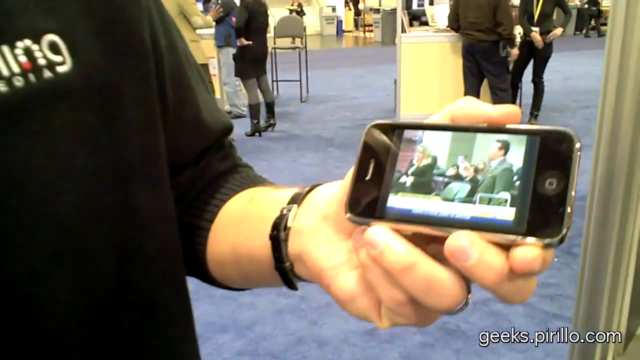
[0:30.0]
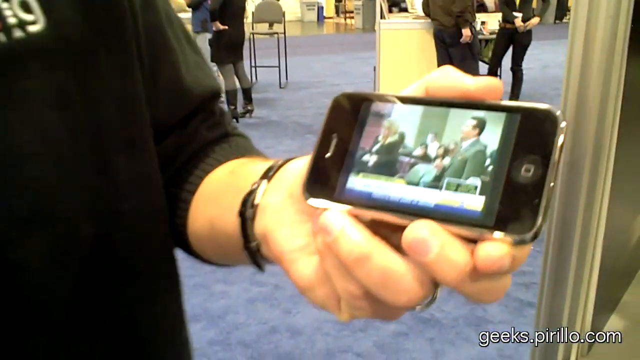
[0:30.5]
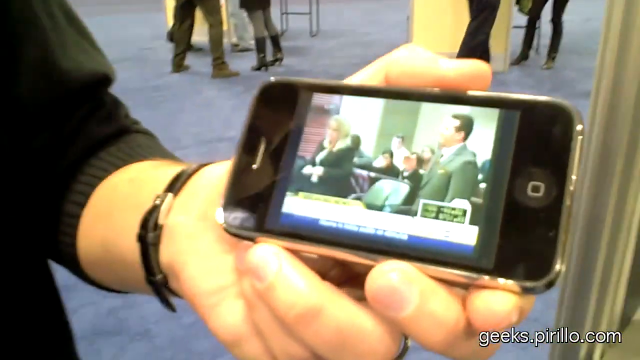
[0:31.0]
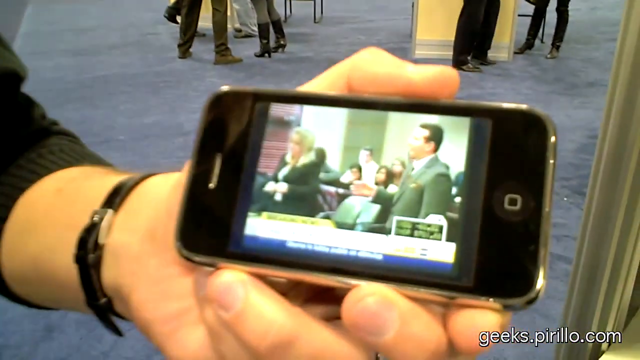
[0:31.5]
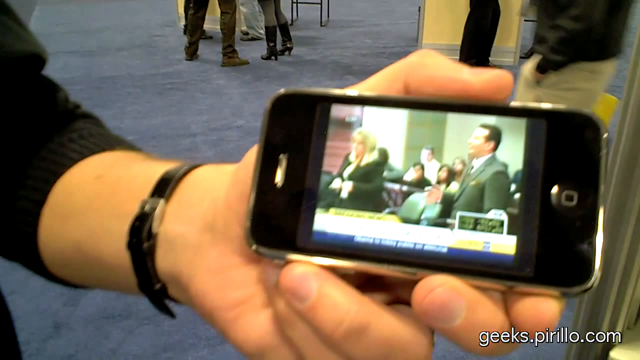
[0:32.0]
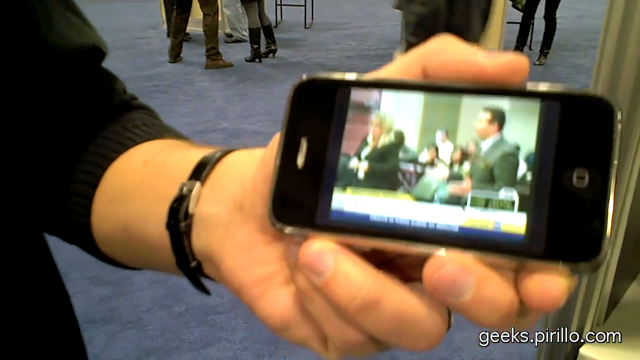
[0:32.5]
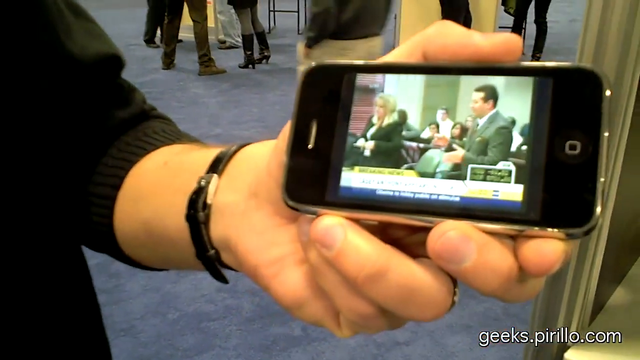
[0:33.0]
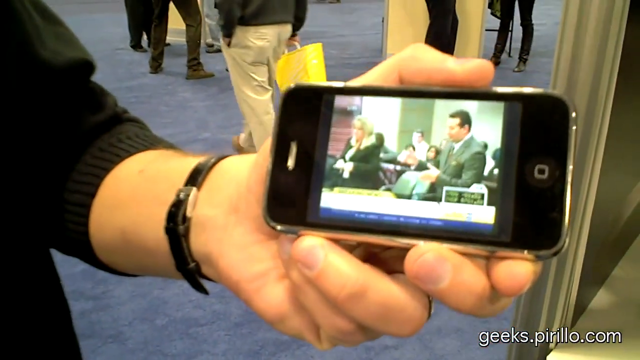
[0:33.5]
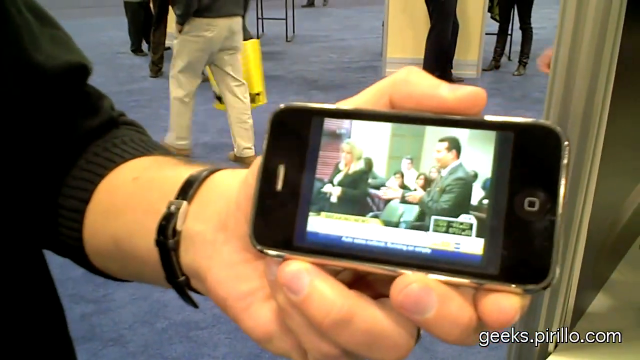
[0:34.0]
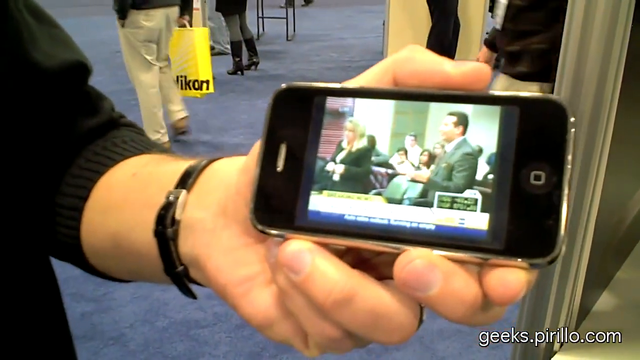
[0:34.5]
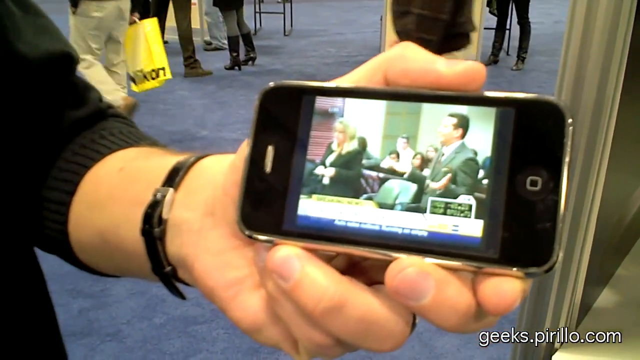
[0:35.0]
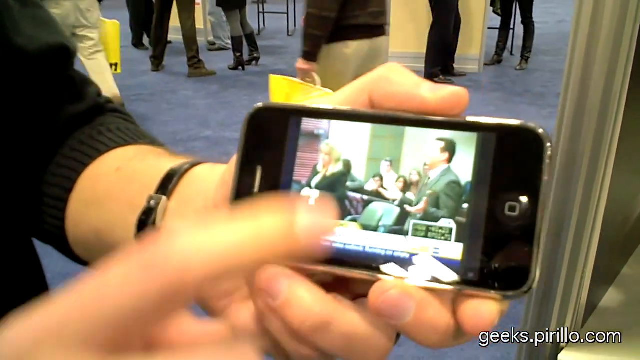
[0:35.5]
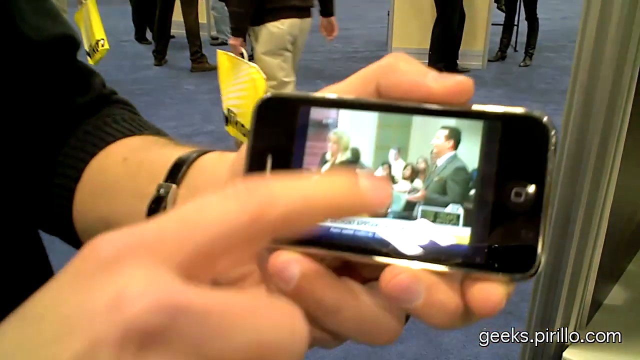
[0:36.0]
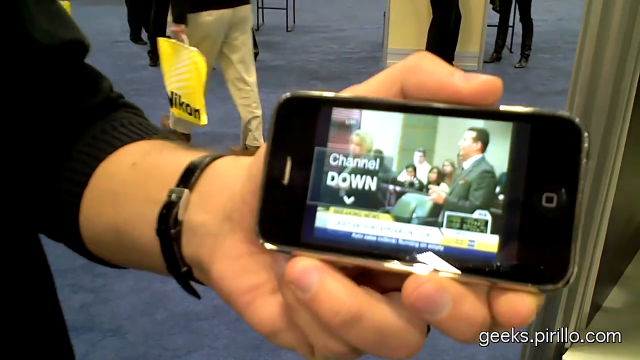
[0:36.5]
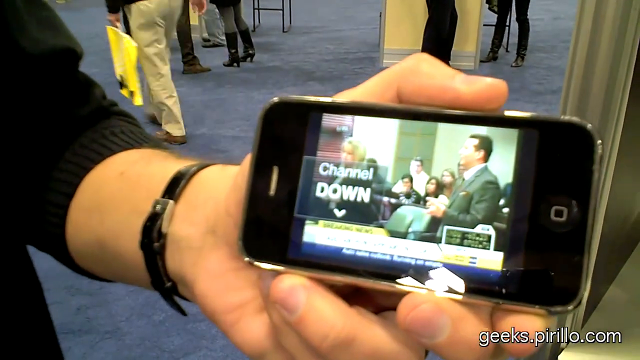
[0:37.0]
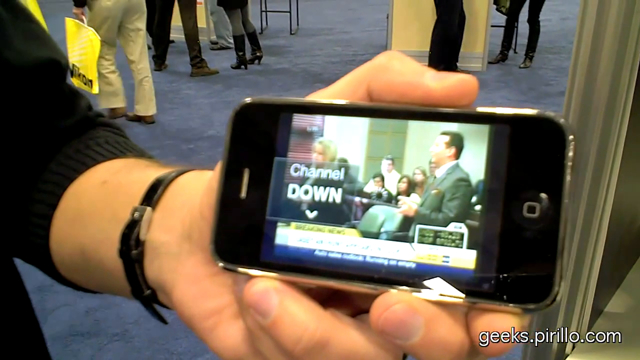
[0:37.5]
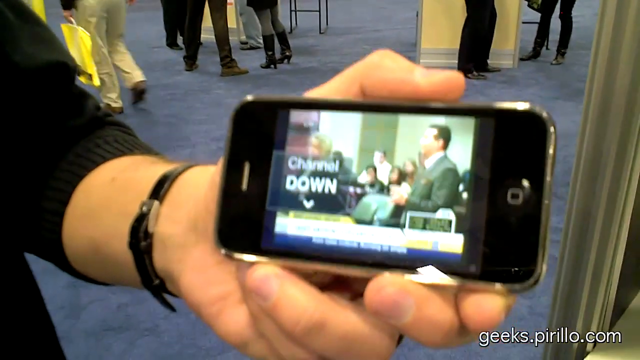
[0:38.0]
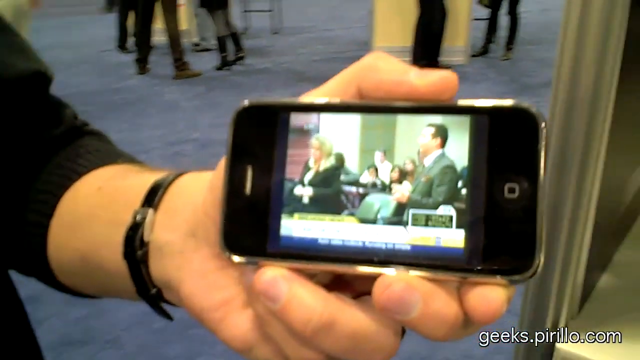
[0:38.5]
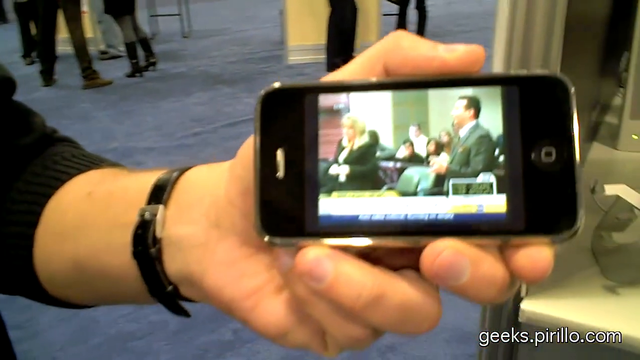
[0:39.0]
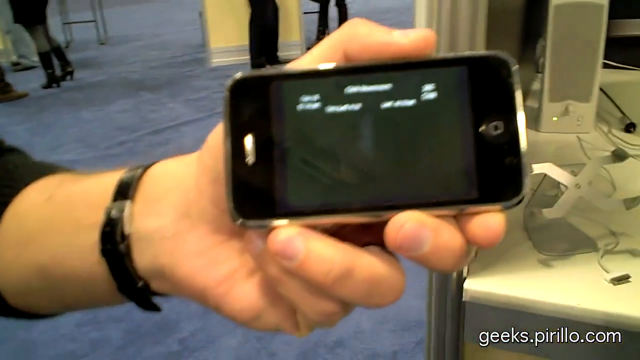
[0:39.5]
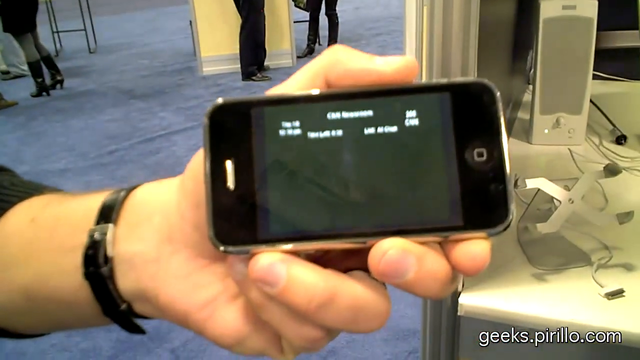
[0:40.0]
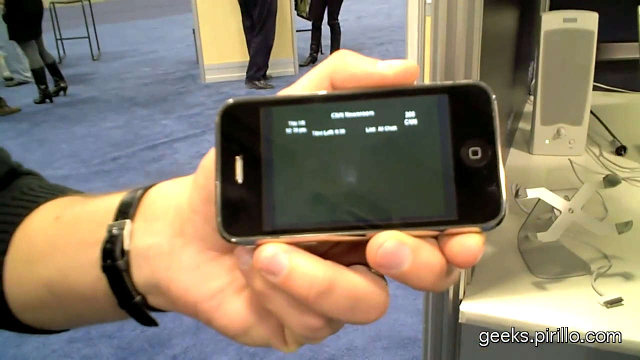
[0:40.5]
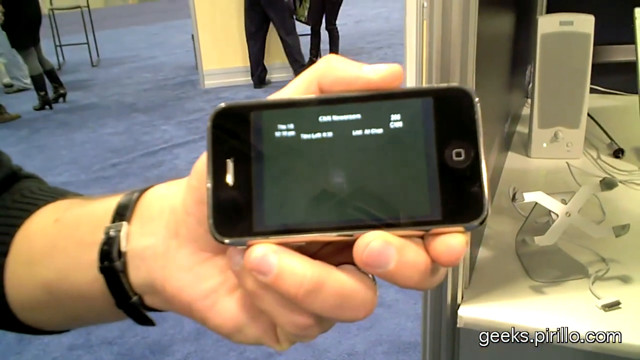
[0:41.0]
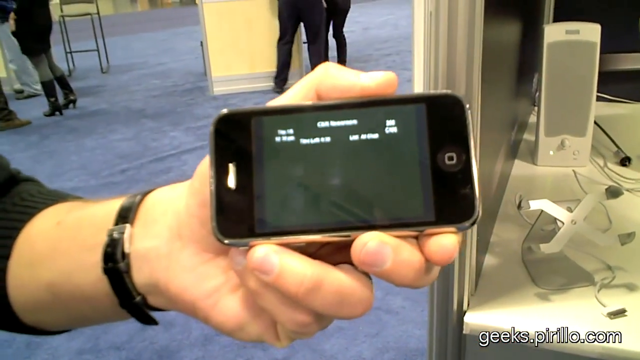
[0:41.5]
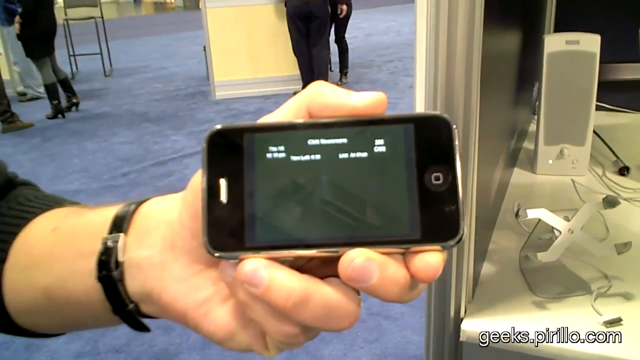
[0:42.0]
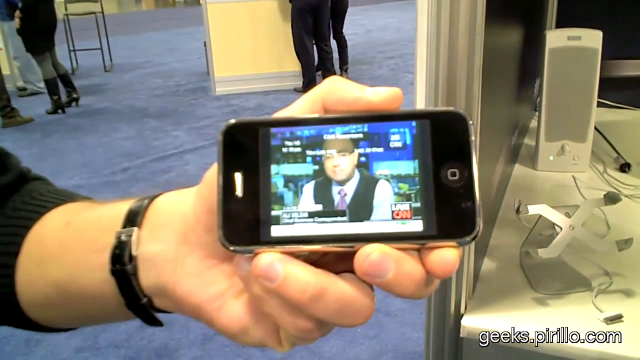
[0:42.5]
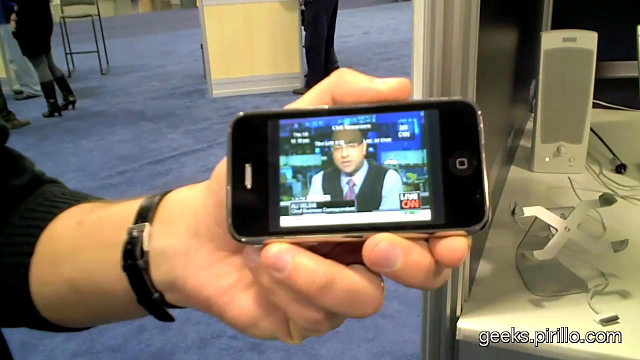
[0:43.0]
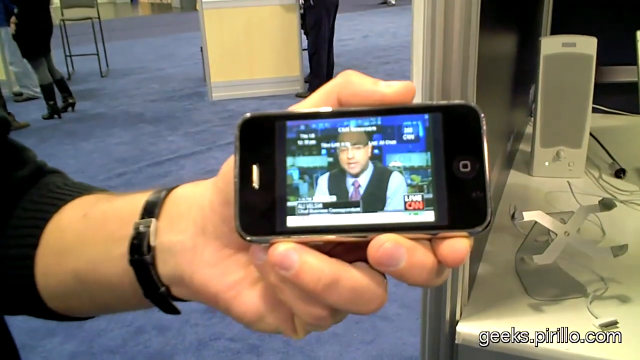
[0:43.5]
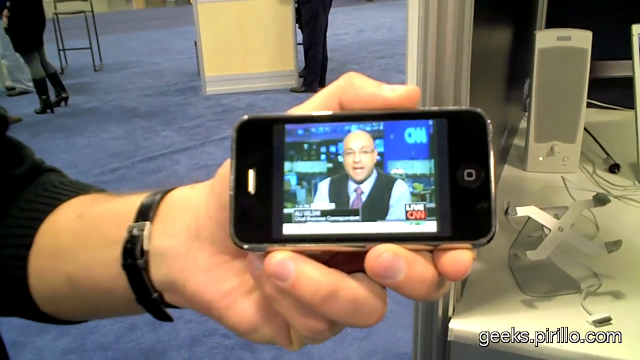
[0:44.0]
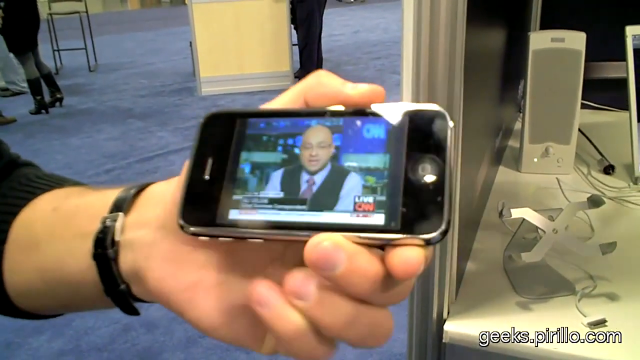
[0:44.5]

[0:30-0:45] The same man in the Sling sweater holds the iPhone horizontally, showing some kind of program that might be a court show. He taps the phone with his index finger, and the channel changes: "channel down" appears in a little box, the screen goes black for a second or two, and then white text with a title appears. The new channel is CNN News, showing a news reporter speaking from behind a desk inside a studio. The location is the same convention, with blue carpet, the watermark in the bottom right-hand corner, and a little of the background visible, including a desk with a speaker that is on.